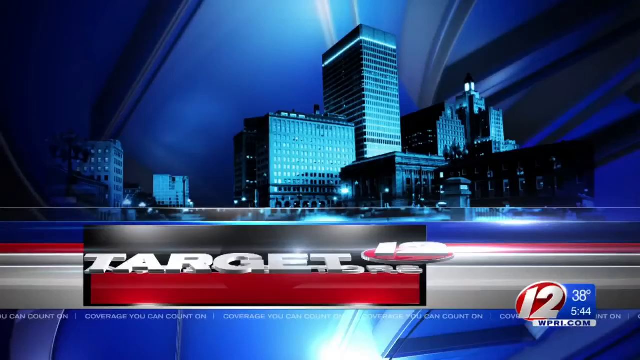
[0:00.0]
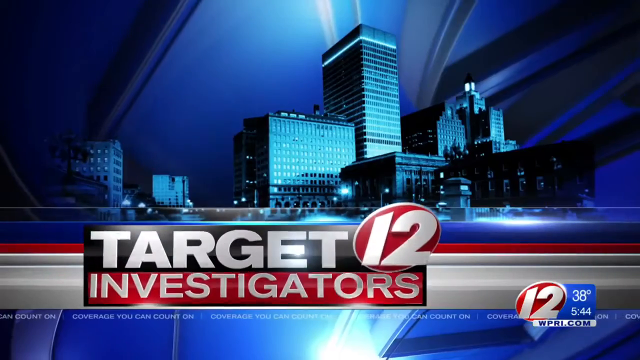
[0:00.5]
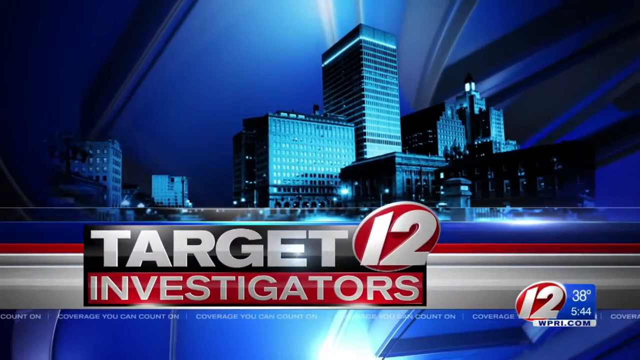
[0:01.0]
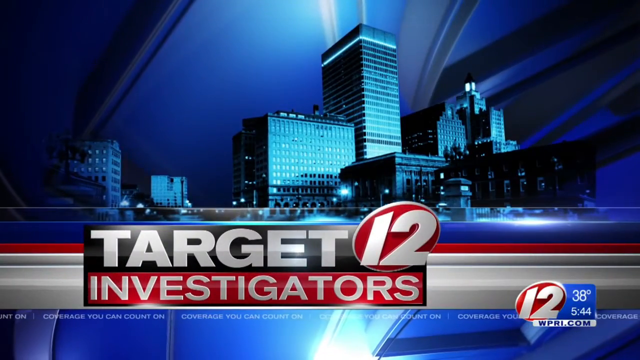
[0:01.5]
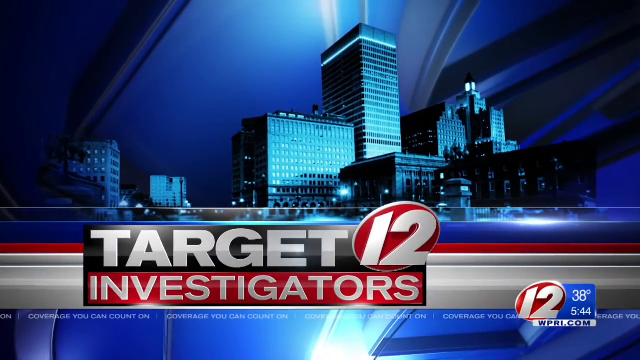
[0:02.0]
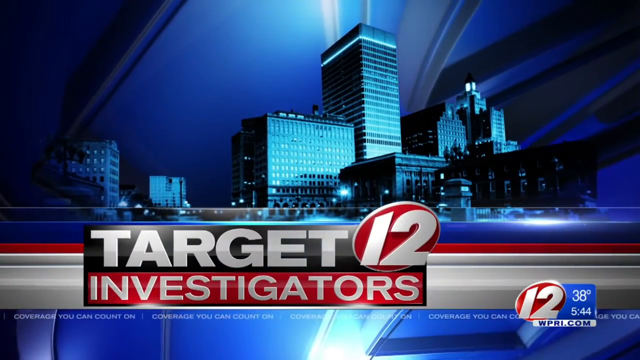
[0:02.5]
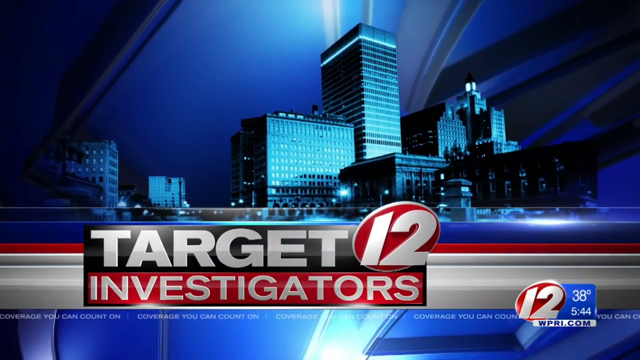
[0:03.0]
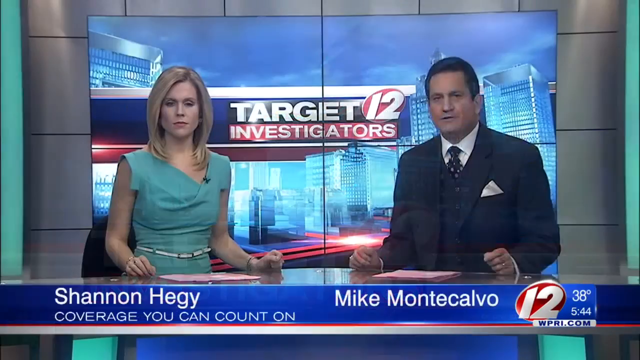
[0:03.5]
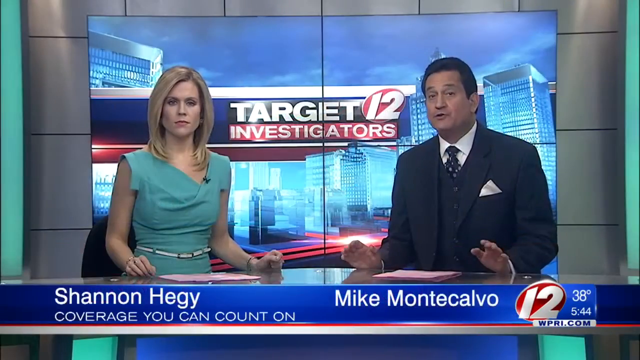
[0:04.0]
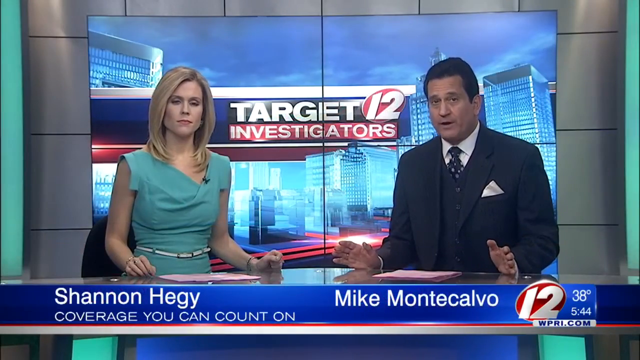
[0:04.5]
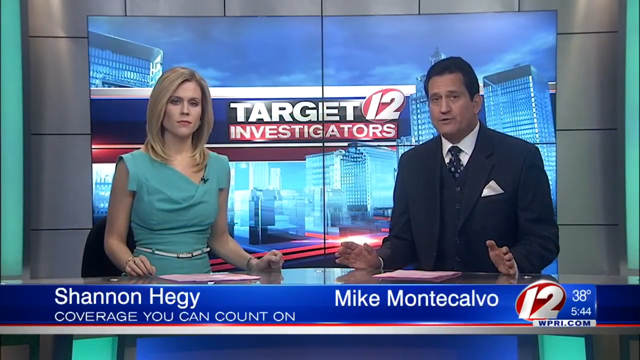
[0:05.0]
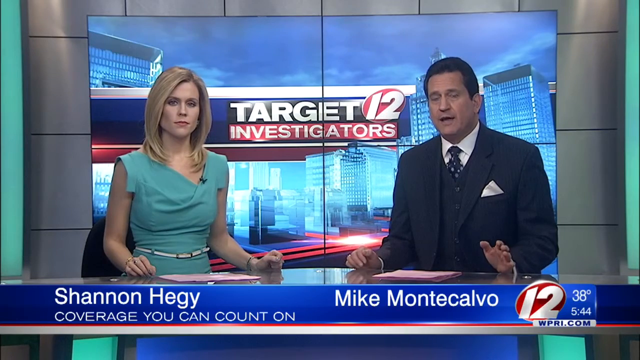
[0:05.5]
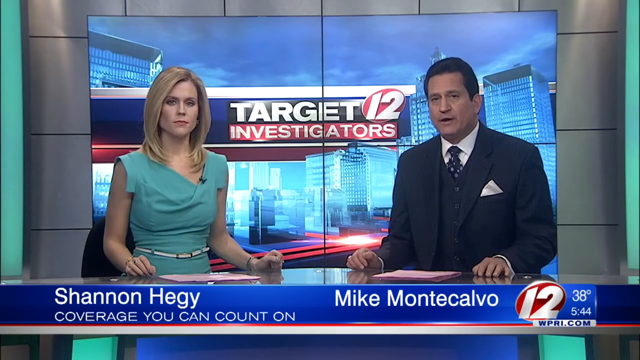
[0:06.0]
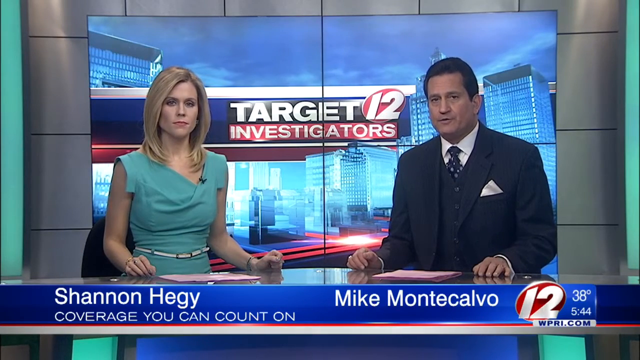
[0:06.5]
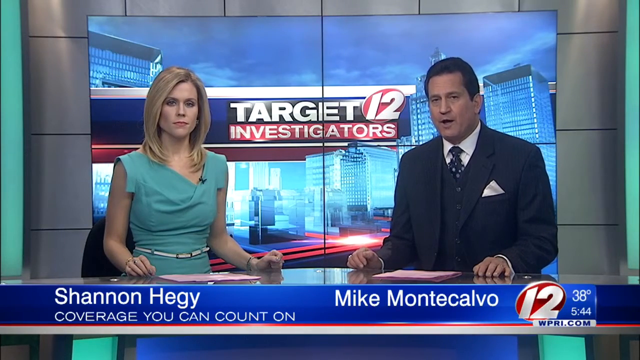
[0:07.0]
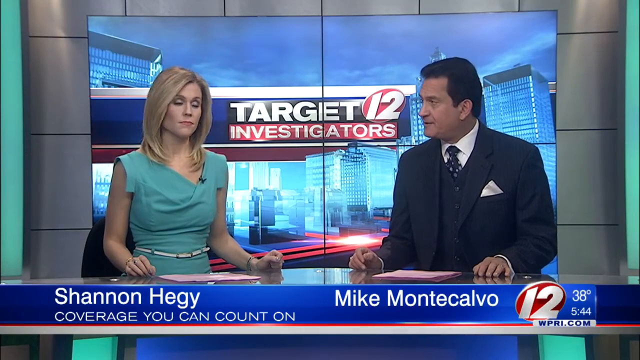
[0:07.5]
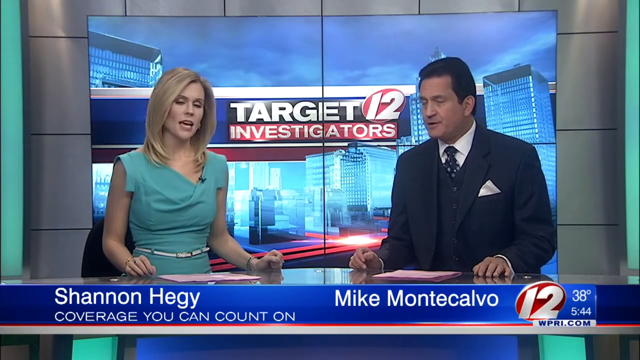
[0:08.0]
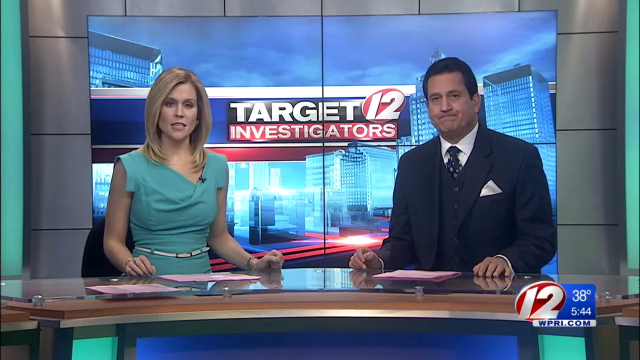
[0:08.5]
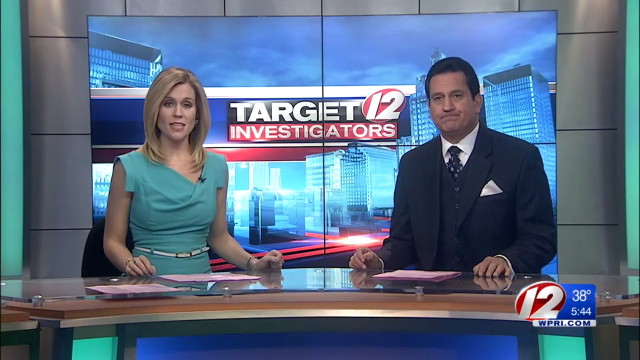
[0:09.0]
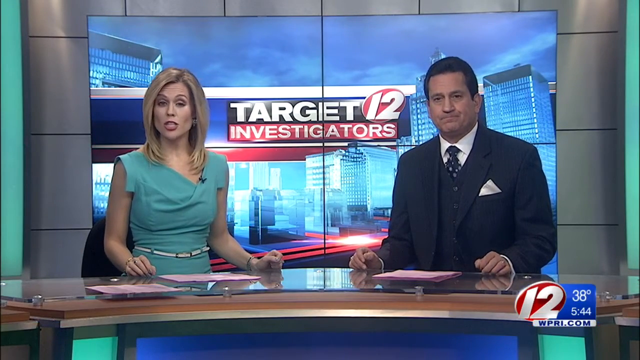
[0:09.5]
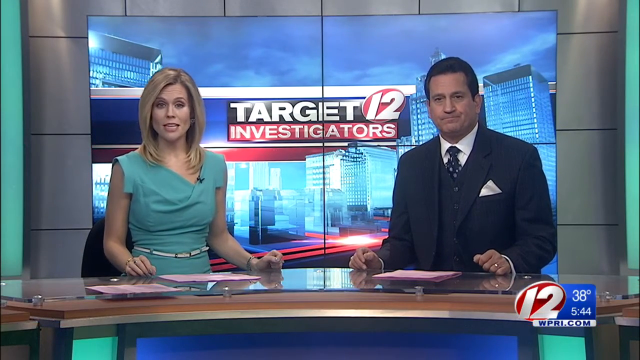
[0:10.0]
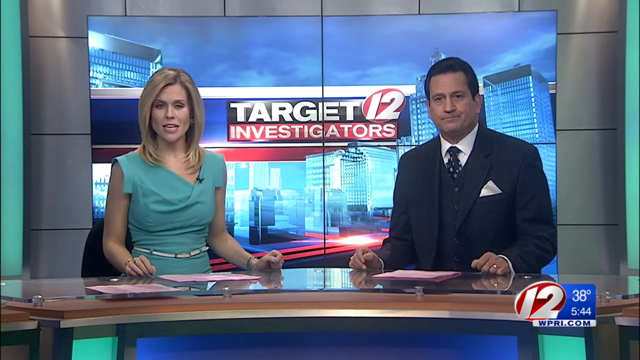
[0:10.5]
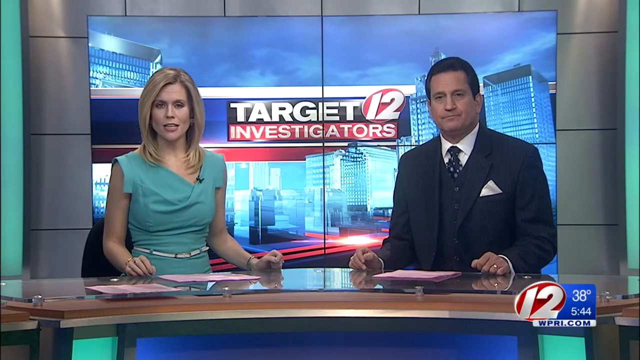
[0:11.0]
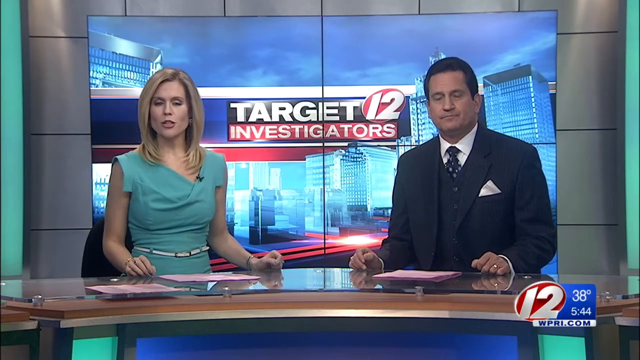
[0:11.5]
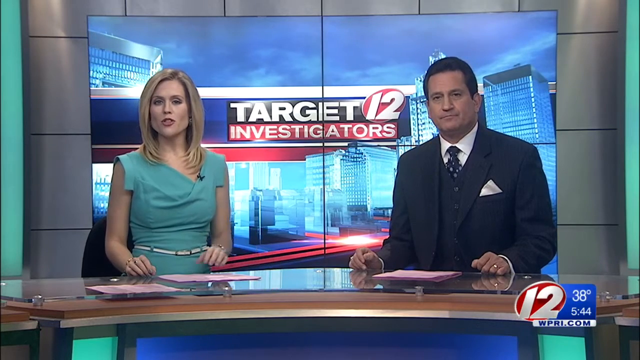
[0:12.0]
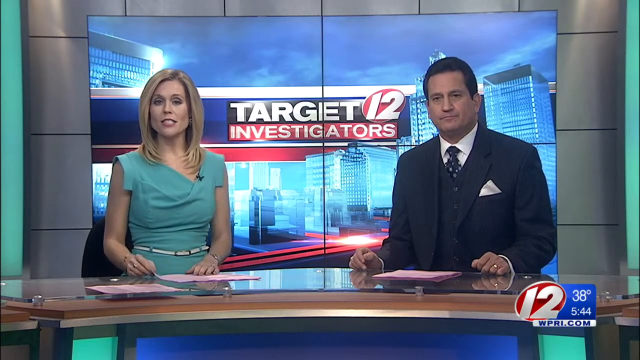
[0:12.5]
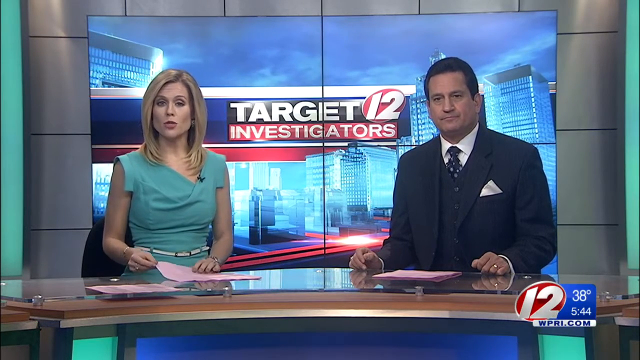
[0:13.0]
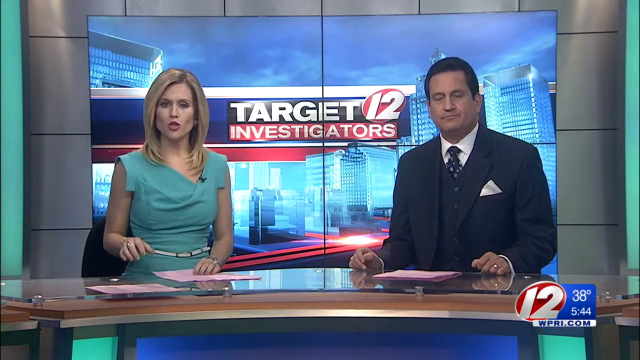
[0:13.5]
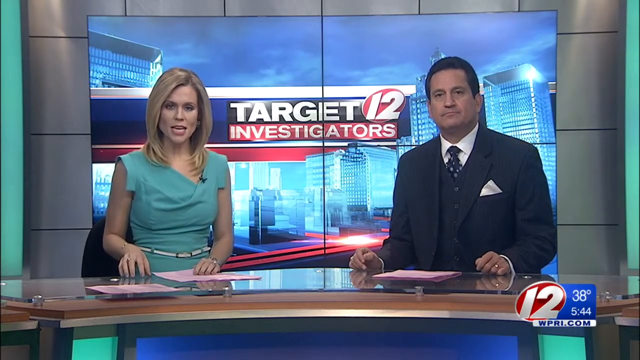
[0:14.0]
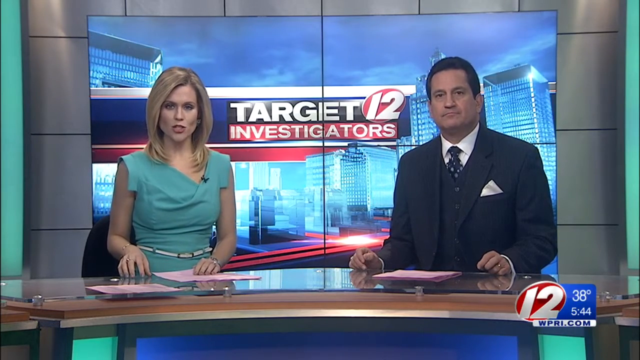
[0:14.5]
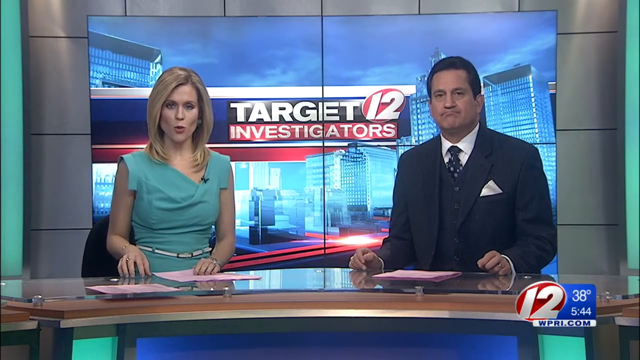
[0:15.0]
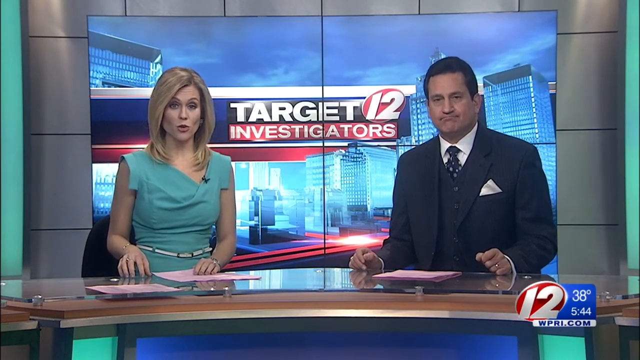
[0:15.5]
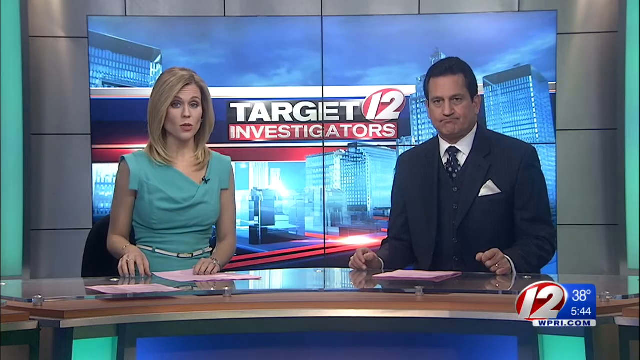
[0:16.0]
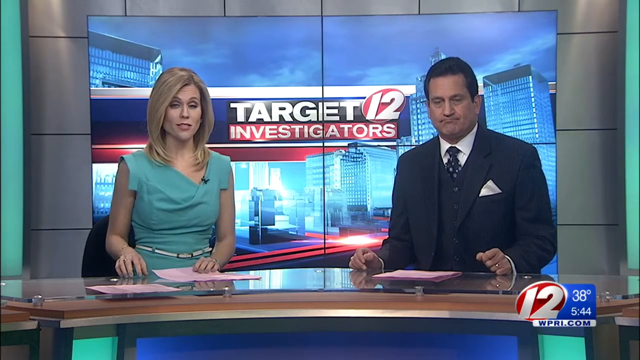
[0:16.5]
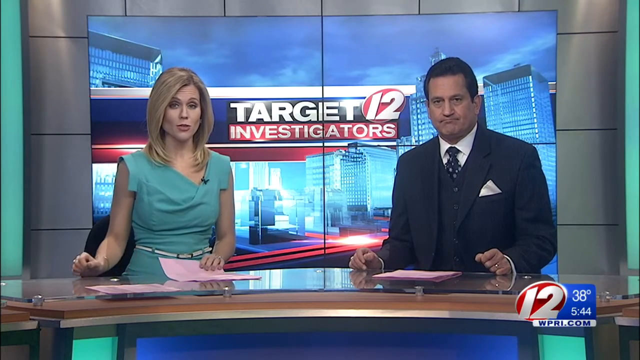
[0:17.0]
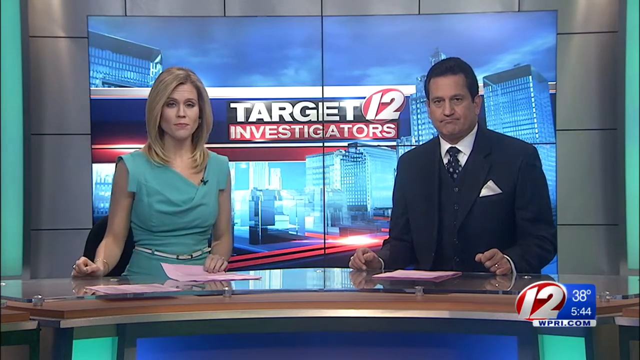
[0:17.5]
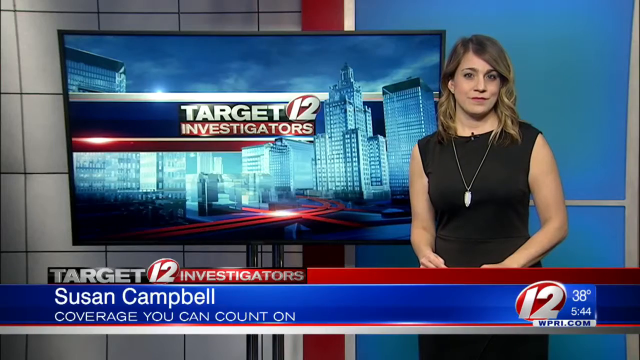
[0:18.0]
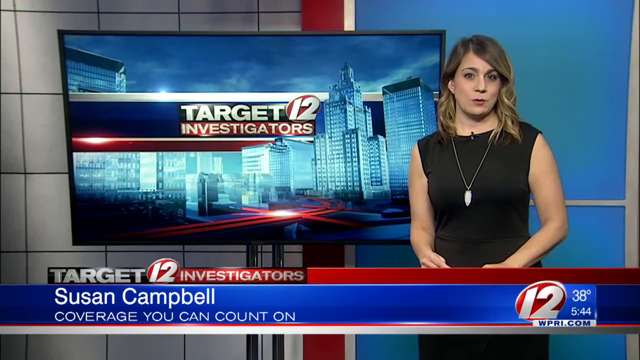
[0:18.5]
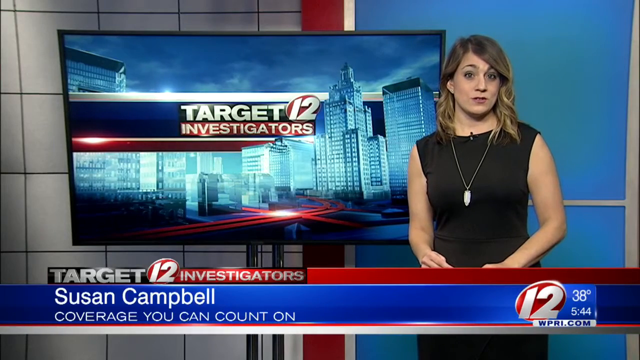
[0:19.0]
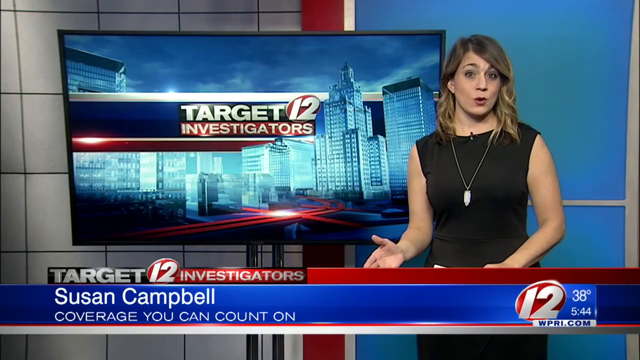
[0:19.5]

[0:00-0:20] The video seems to be from a news station. A building background appears, and then a title card bar pops up at the bottom that says "target 12 investigators." In the bottom right there is a temperature gauge and a small timestamp. The screen then fades into what looks like a local news anchor table with two anchors behind it: a woman on the left and a man on the right. The man begins to speak, gesturing with his hands on the table; he holds them somewhat open and moves them both outwards, as if explaining something. He looks quite serious at the camera while speaking, then folds his hands separately onto the table. He gestures with his head toward the female anchor next to him, and she begins to speak. Her hands are folded on the table, the left one in a fist and the right one casually open. She nods or shakes her head a bit at the camera while speaking, then gestures with her left hand, moving it toward the top of a stack of papers she has on the desk.